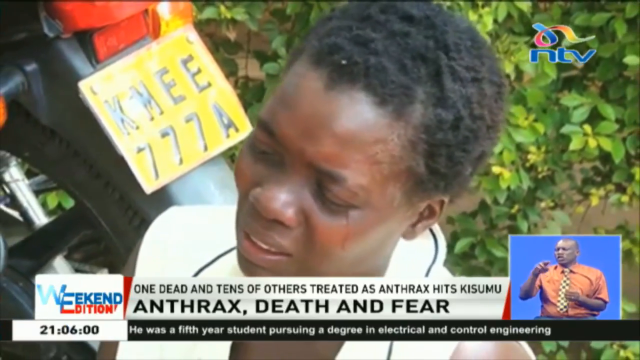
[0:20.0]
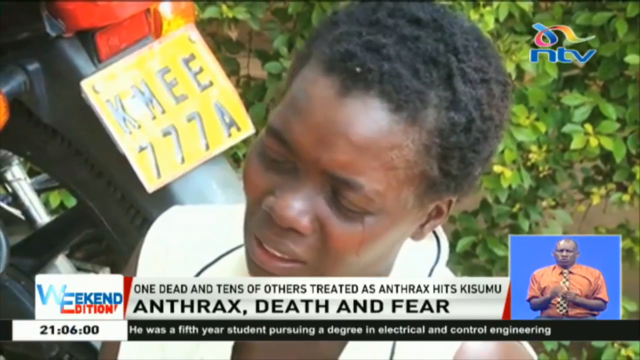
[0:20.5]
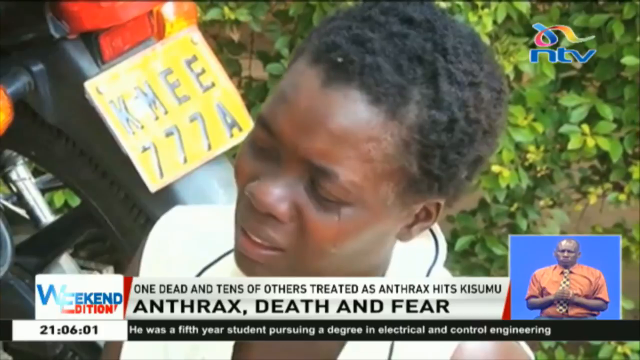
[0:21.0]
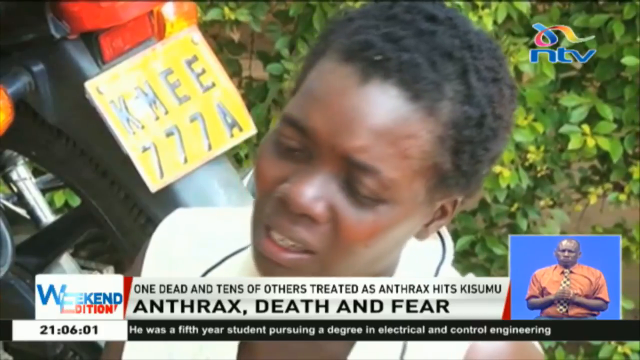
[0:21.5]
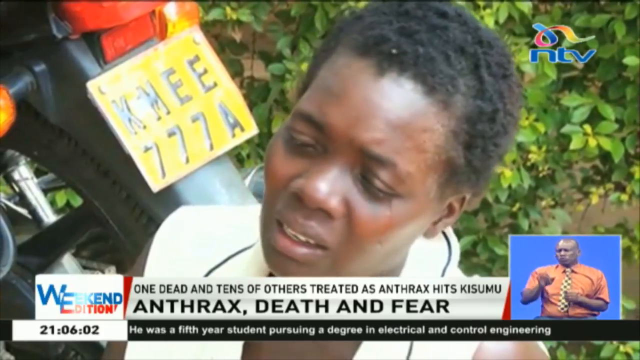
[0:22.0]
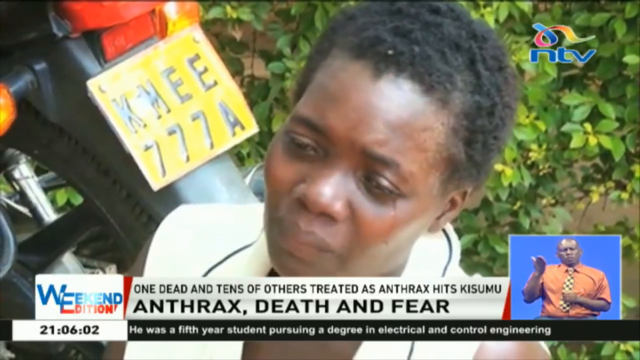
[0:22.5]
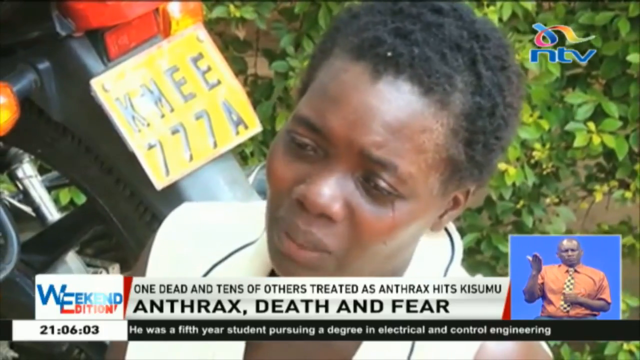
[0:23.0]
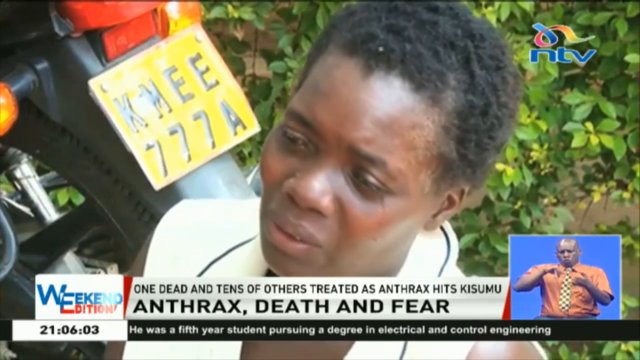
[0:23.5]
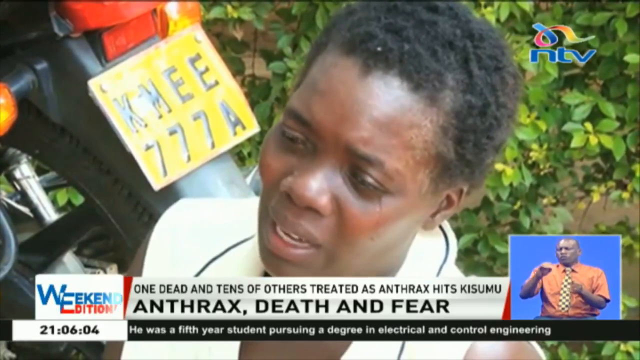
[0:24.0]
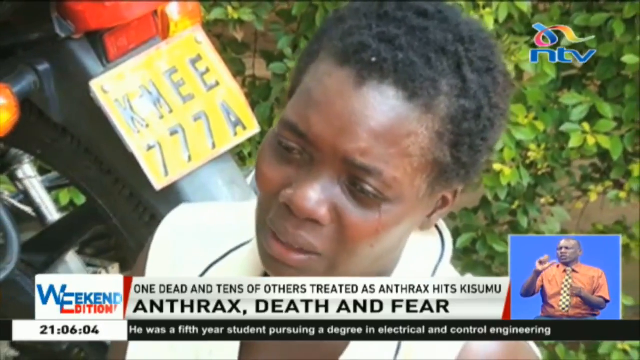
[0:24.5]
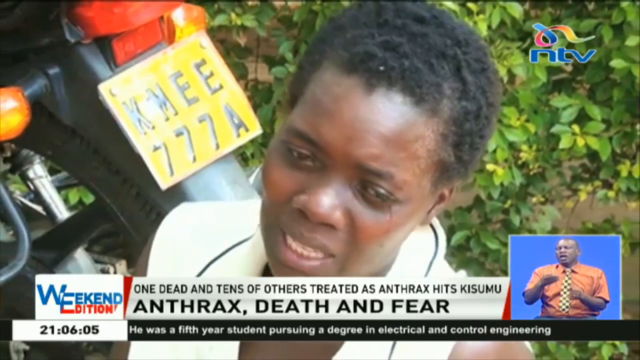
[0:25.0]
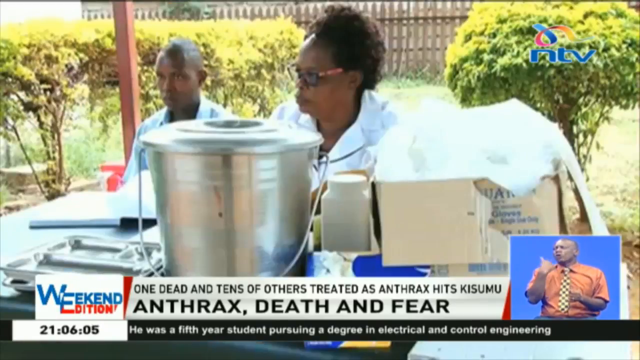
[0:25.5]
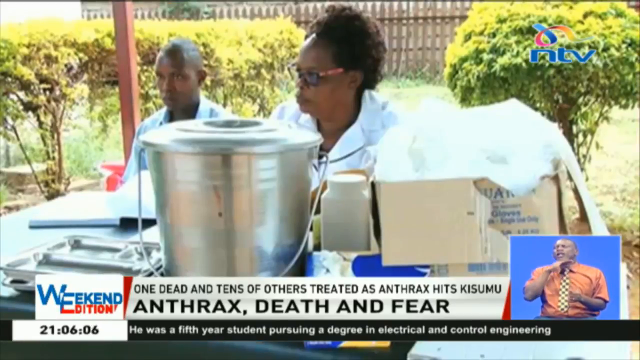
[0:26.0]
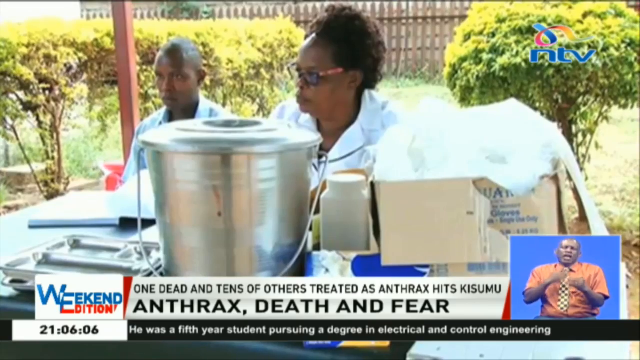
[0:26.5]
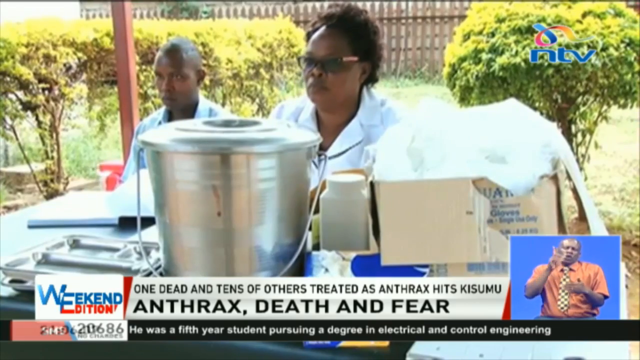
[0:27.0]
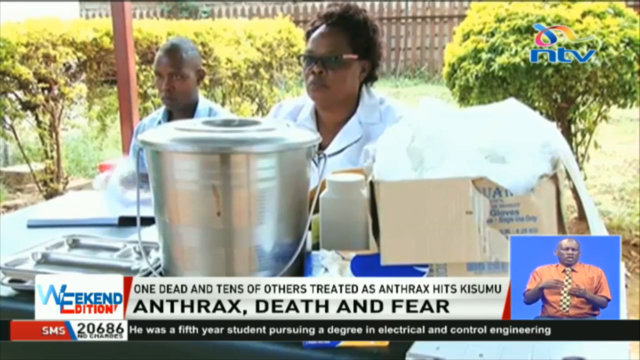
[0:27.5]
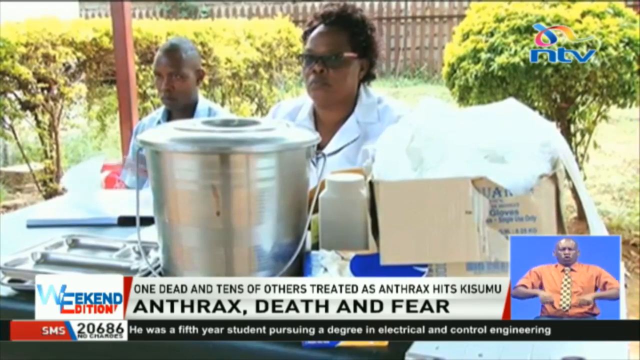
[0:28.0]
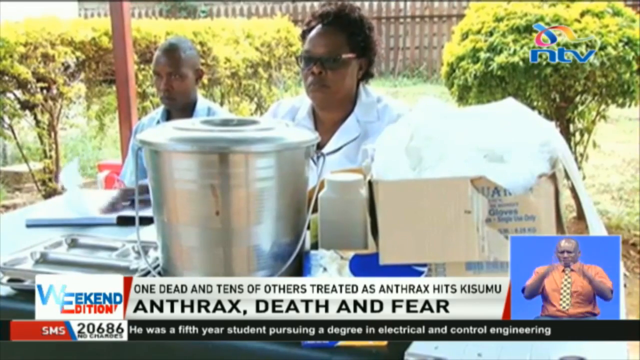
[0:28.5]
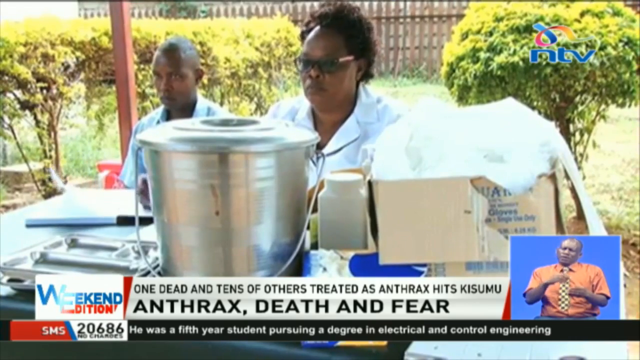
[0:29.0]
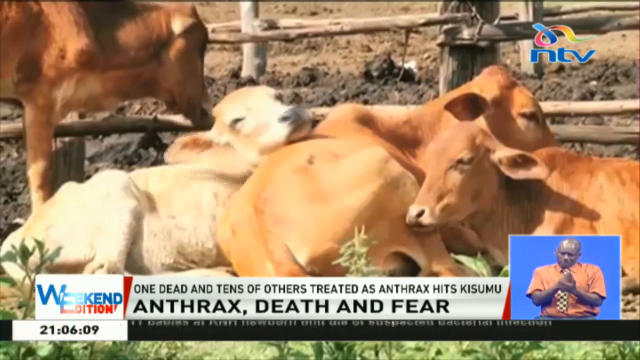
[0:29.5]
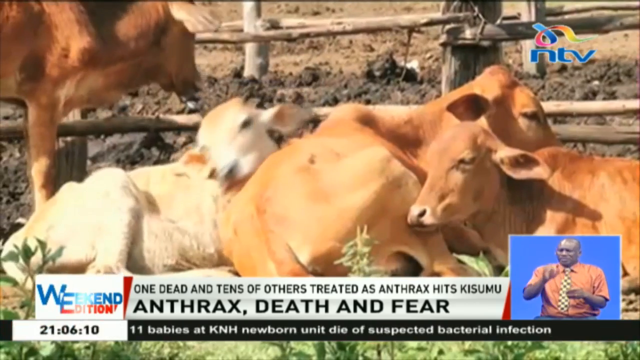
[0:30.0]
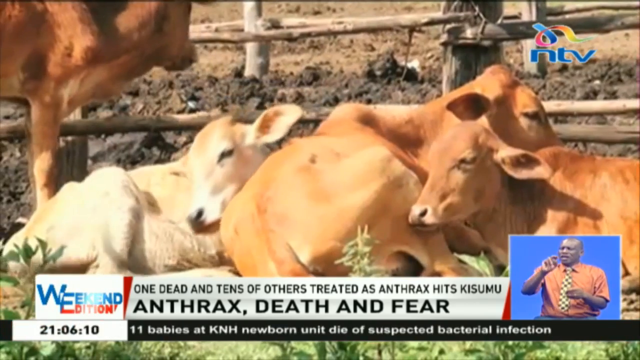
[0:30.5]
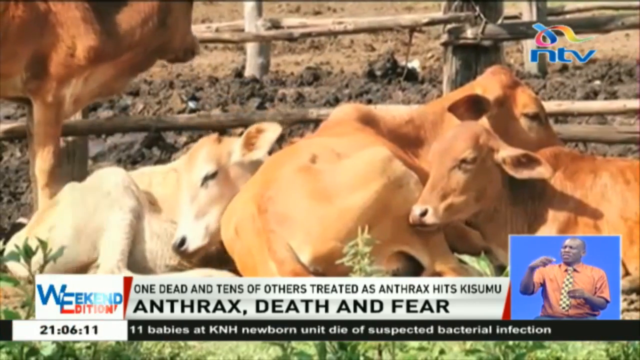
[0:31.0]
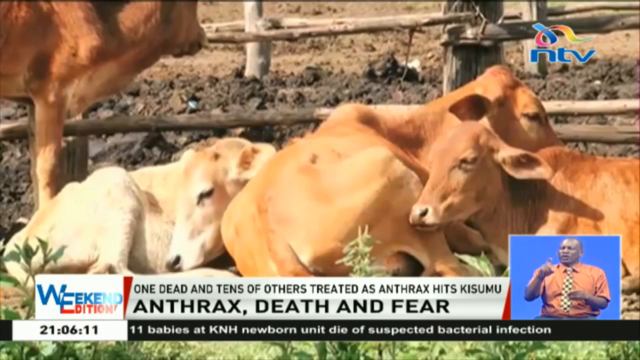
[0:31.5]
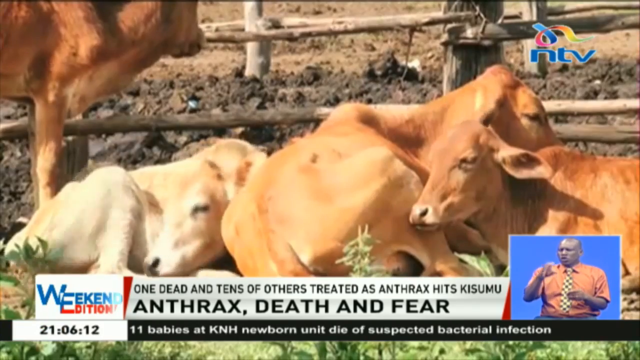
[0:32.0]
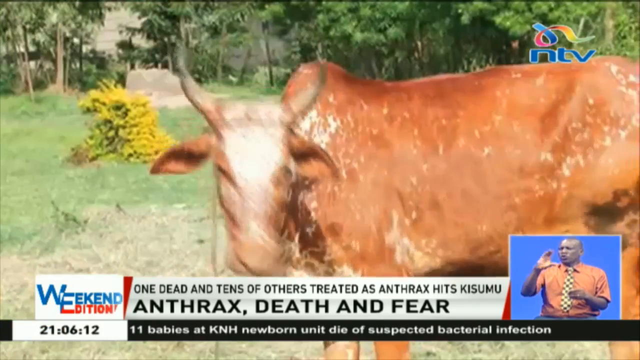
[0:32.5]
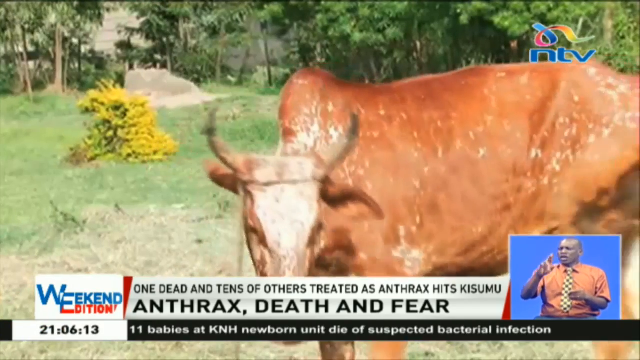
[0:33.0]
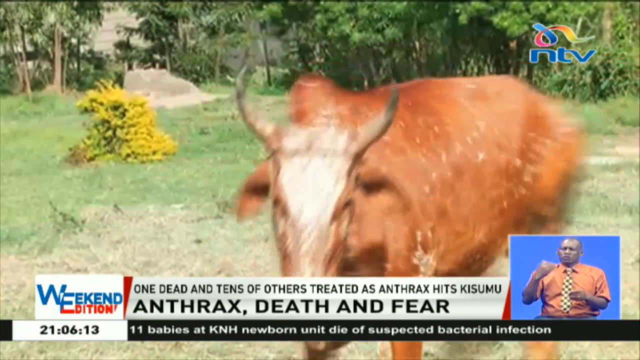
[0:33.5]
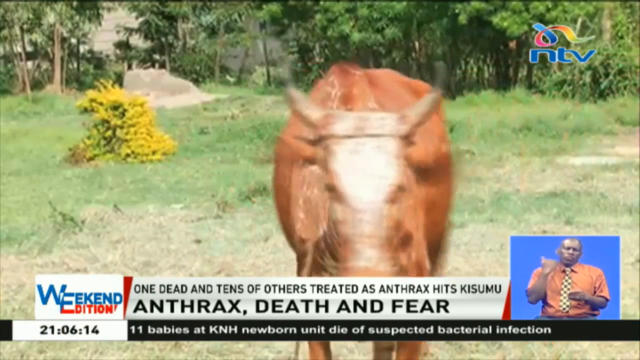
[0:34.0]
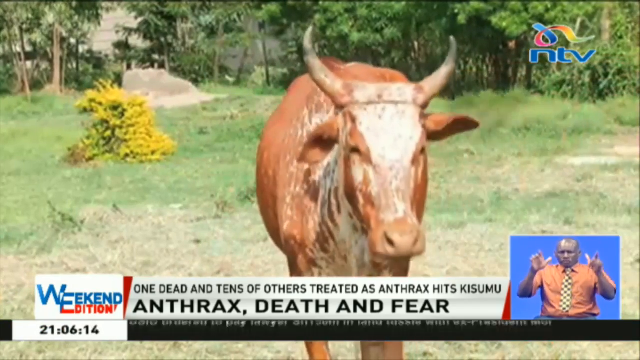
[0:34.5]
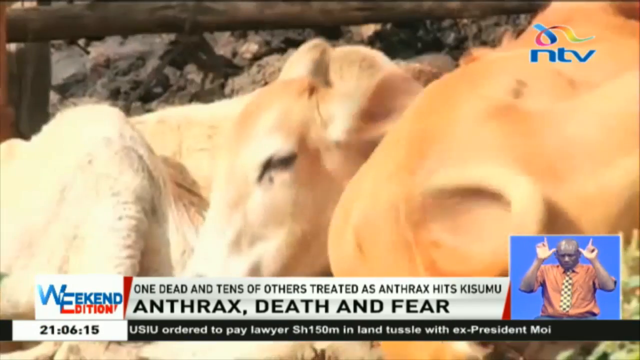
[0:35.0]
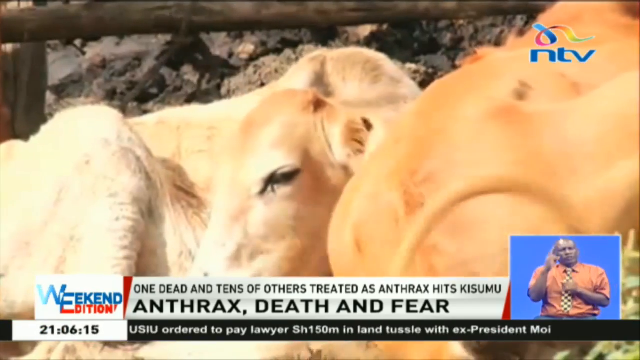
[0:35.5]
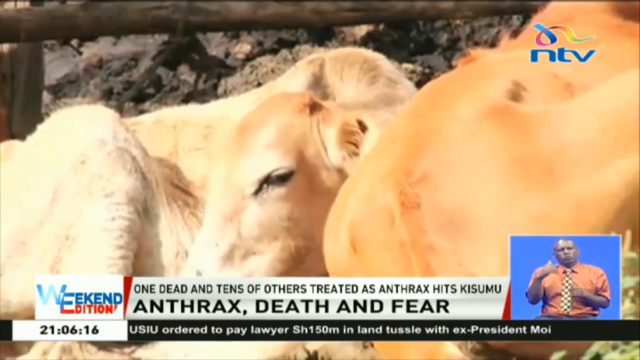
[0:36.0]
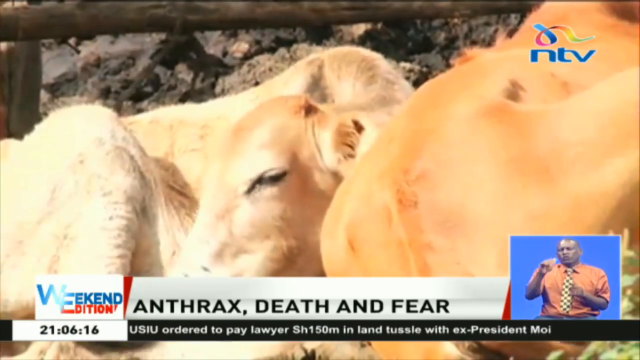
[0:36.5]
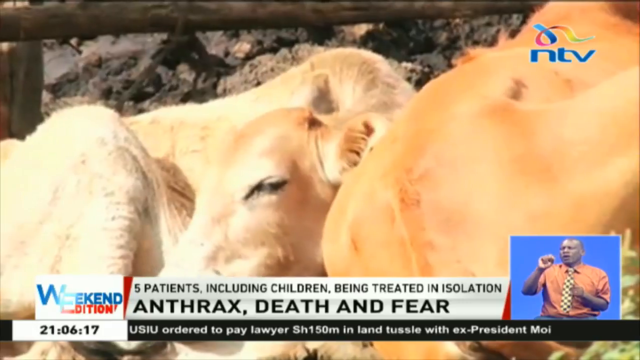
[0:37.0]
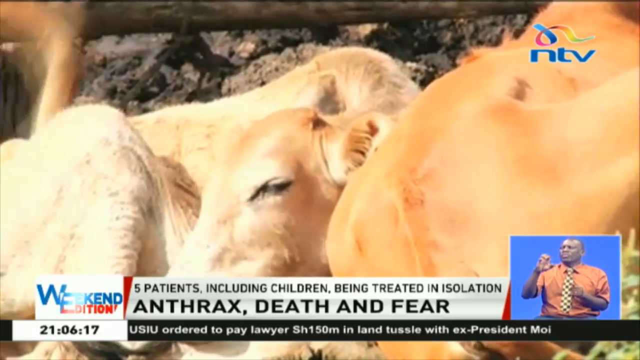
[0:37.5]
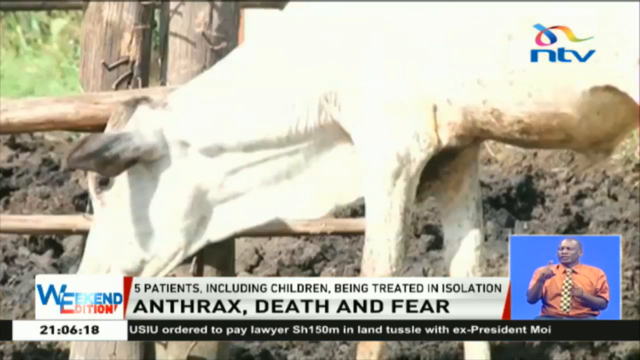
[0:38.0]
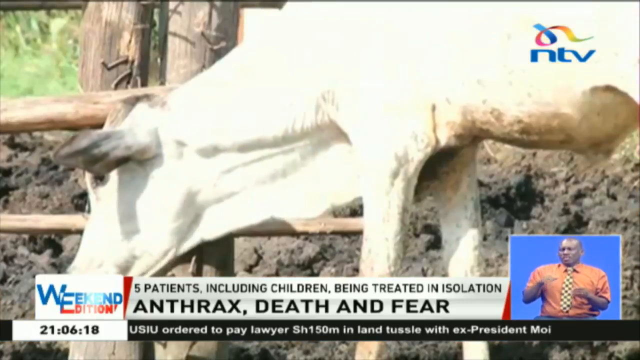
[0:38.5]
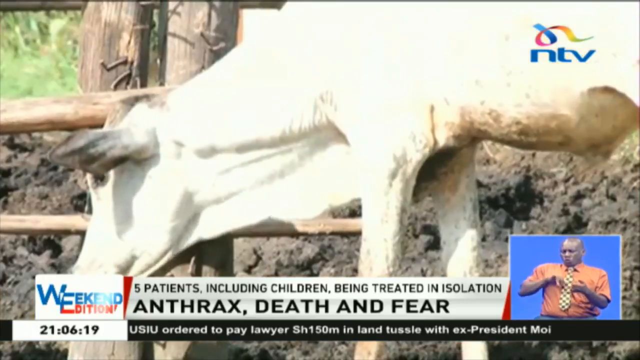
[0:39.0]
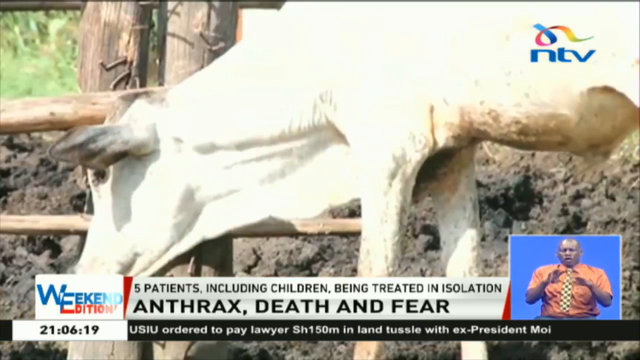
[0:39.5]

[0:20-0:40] In a close-up, an African woman sits on the ground next to a motorcycle, seeming very upset. A white rectangular box at the bottom of the screen reads "one dead and tens of others treated as anthrax hits Kisumu", and underneath it reads "anthrax, death, and fear". The scene changes to an African man and woman sitting behind a small table that holds a big silver pot and some boxes that look like they contain plastic bags; the two are kind of sitting there looking a bit bored. The scene changes again to a bunch of small brown cows, apparently calves, lying on the ground, kind of on top of each other with their heads leaning on one another. A mother or larger brown cow stands in a grassy field with some trees in the distance; it starts off sideways and then turns to face the camera. Another shot shows a small light brown cow curled up on the ground sleeping, its head resting on the back of another small cow lying next to it. Then a large white cow appears, looking like it is grazing.